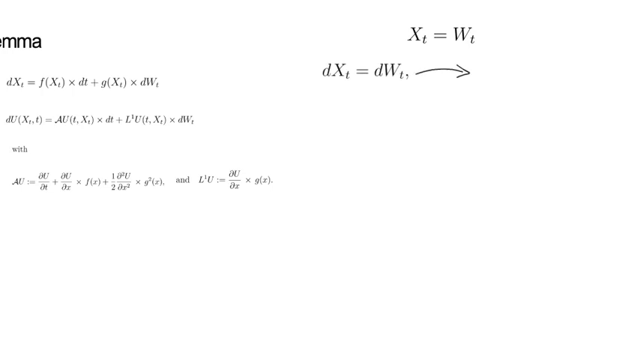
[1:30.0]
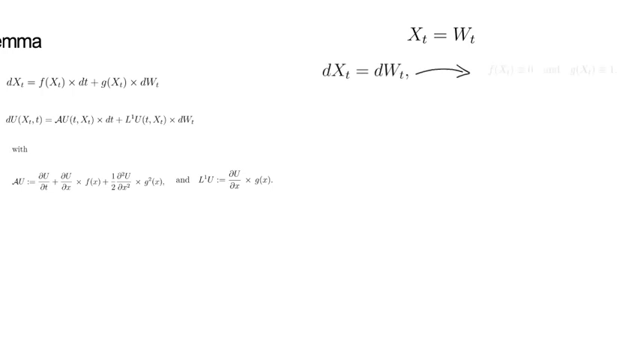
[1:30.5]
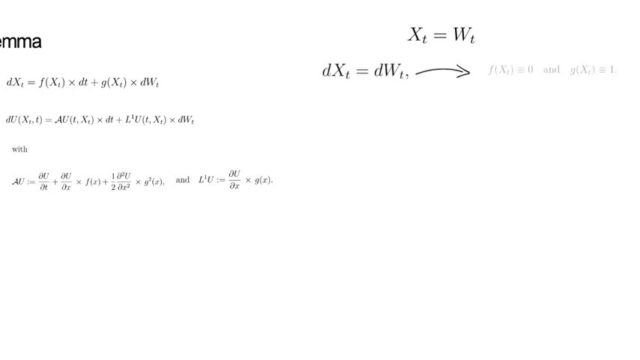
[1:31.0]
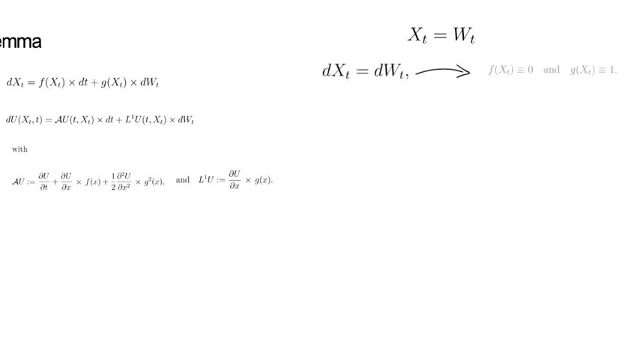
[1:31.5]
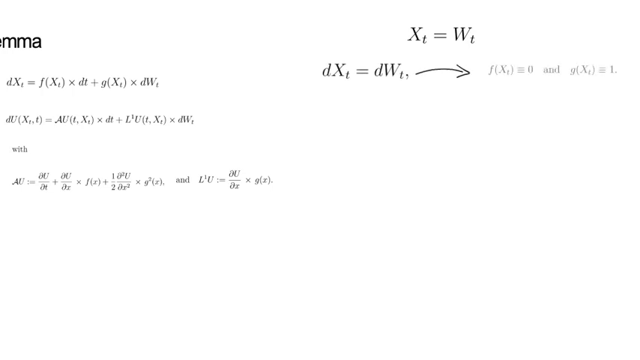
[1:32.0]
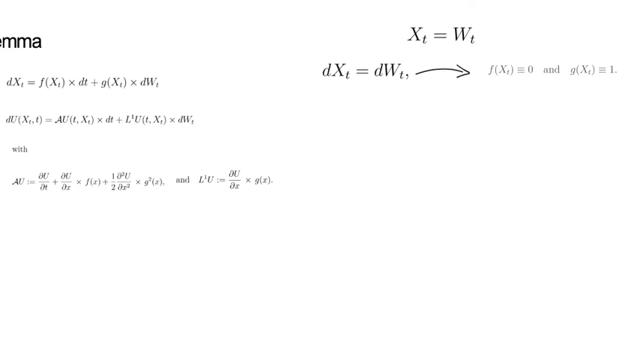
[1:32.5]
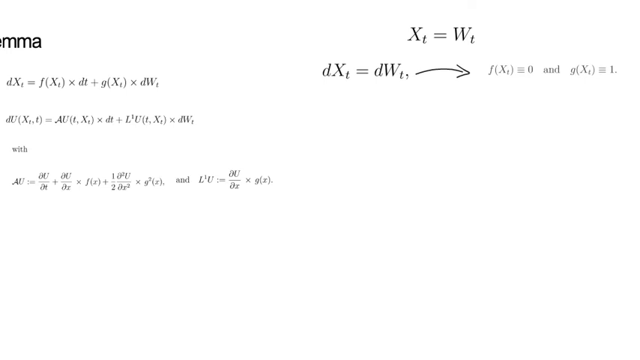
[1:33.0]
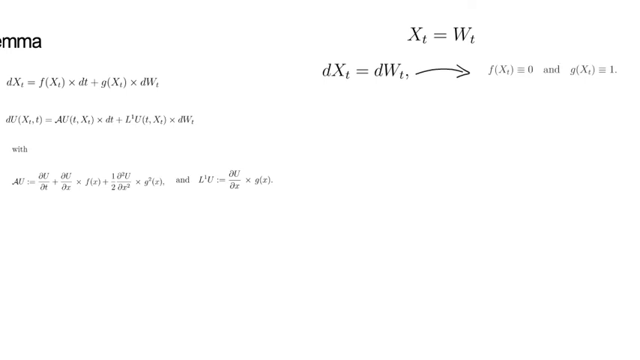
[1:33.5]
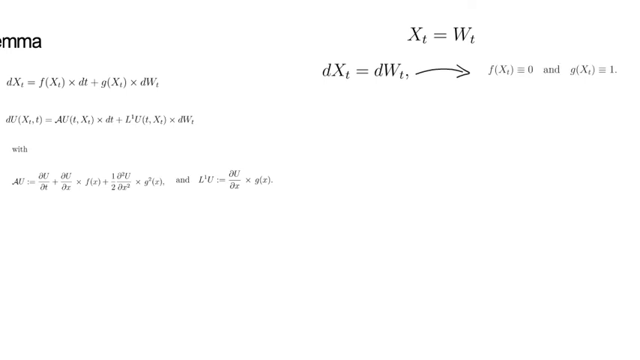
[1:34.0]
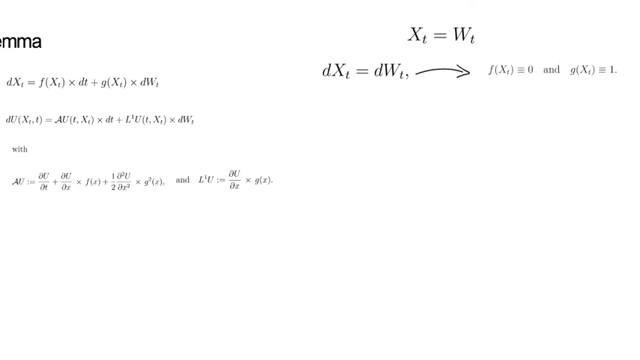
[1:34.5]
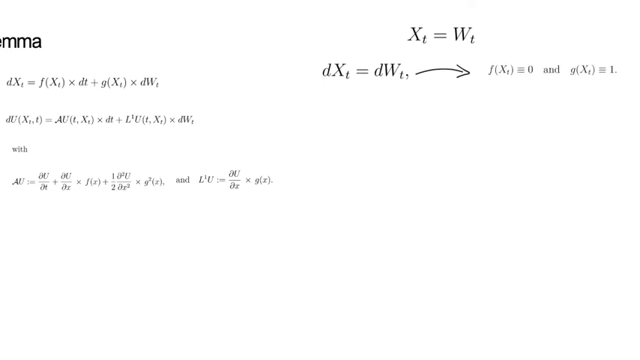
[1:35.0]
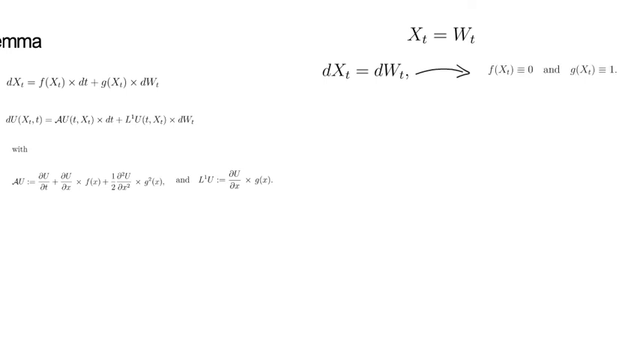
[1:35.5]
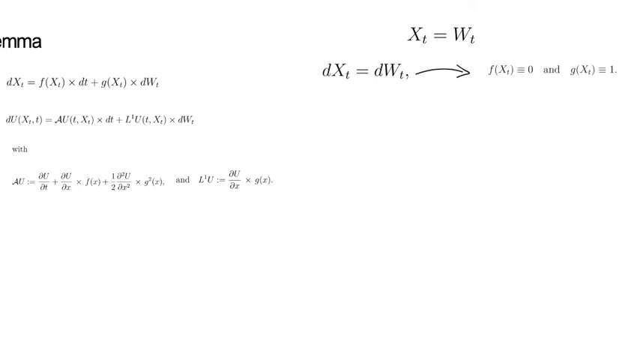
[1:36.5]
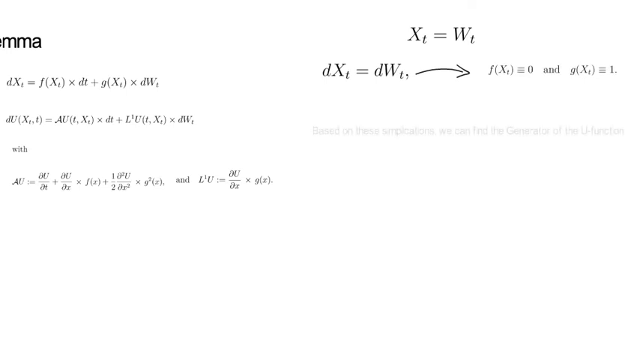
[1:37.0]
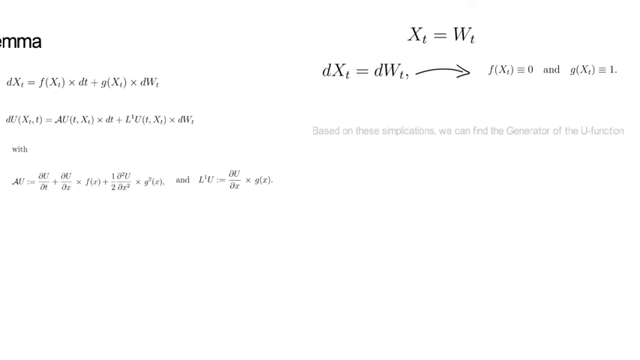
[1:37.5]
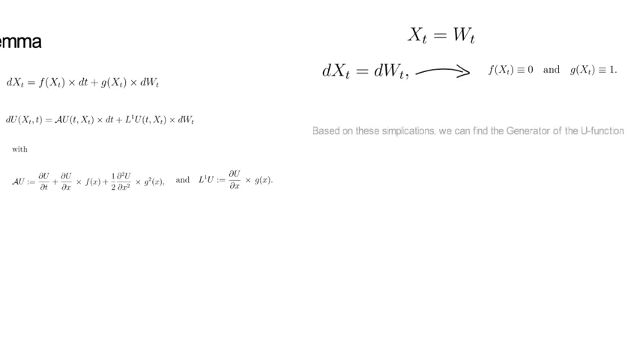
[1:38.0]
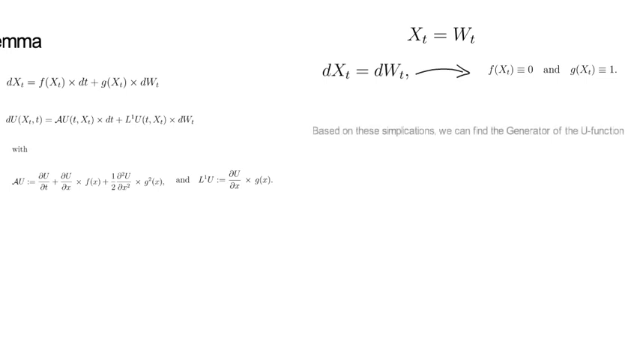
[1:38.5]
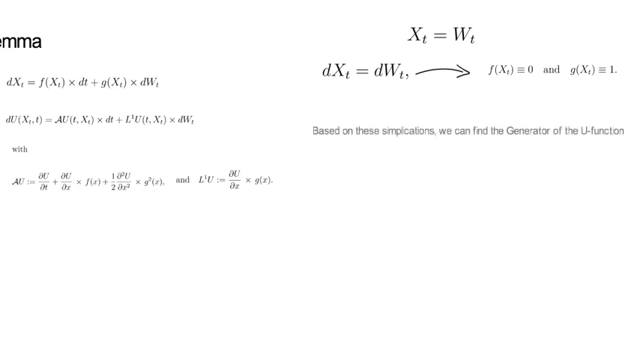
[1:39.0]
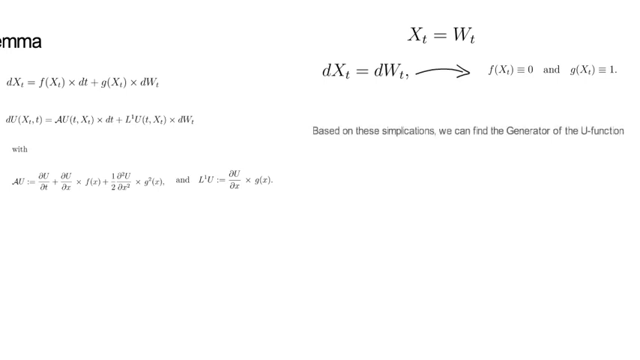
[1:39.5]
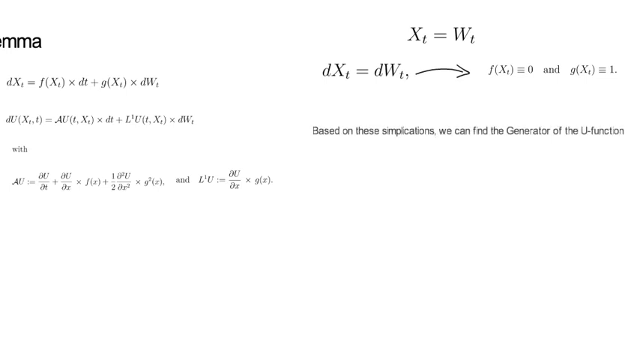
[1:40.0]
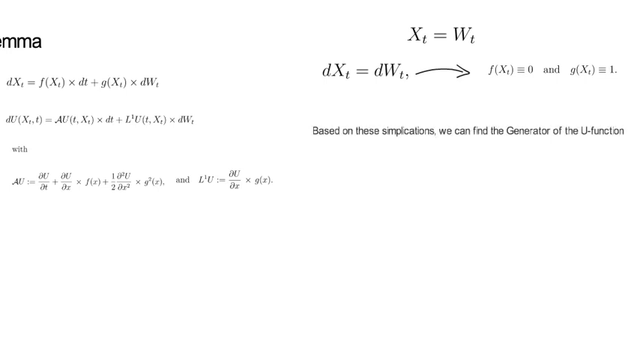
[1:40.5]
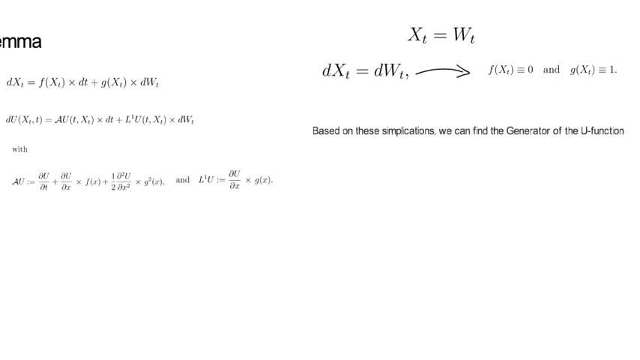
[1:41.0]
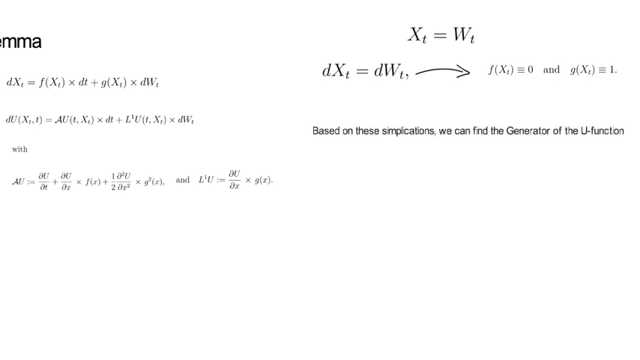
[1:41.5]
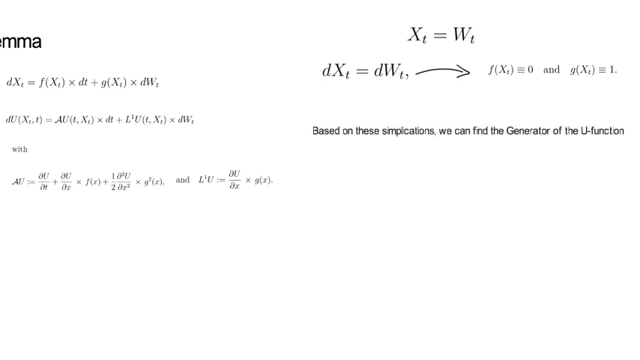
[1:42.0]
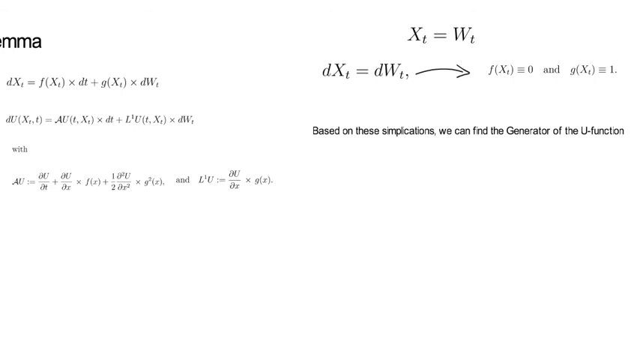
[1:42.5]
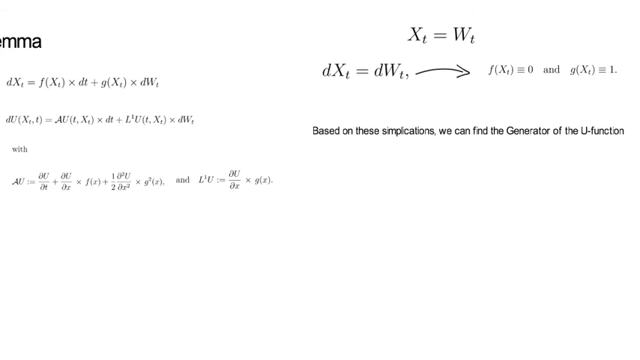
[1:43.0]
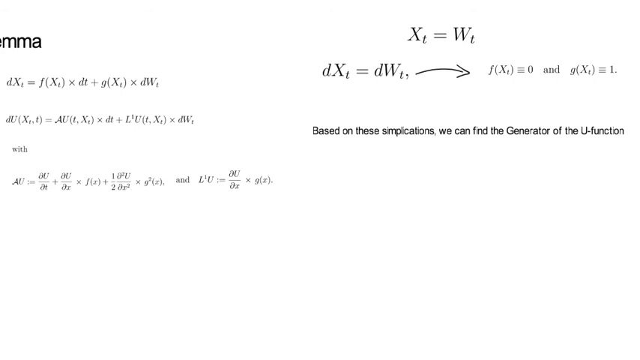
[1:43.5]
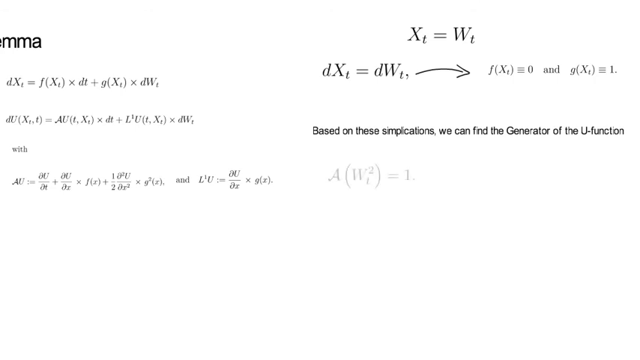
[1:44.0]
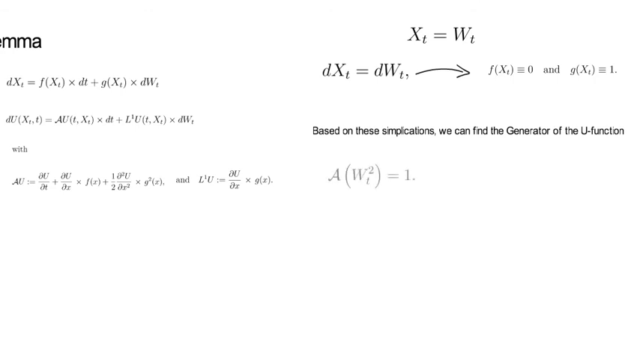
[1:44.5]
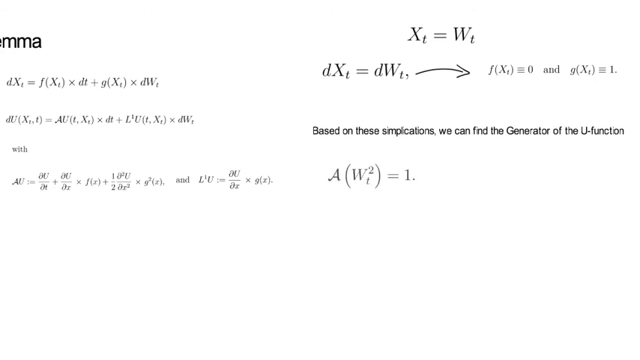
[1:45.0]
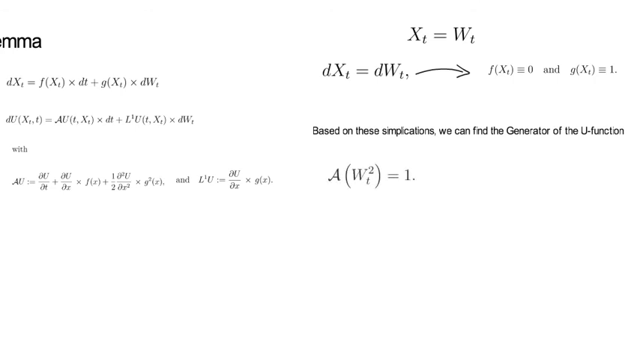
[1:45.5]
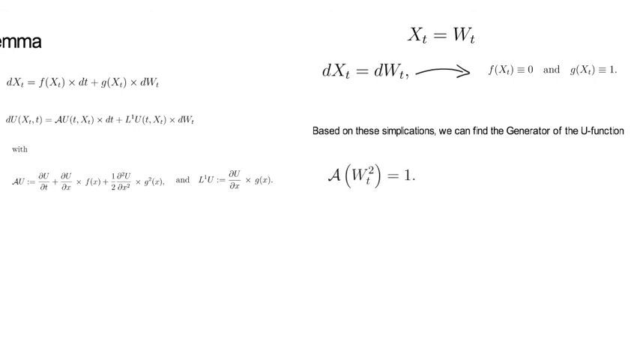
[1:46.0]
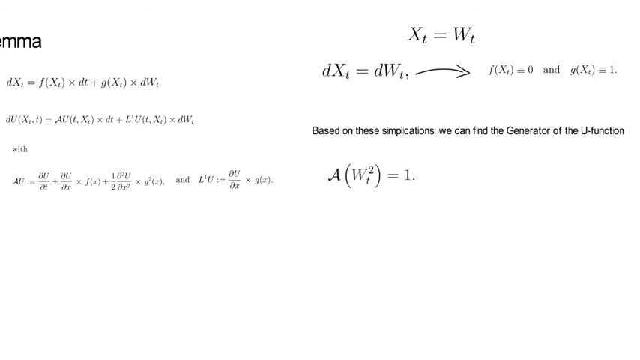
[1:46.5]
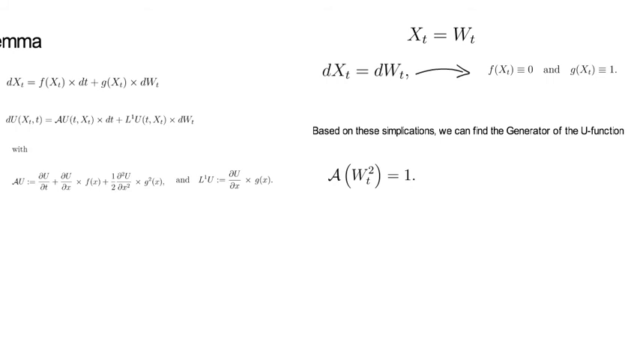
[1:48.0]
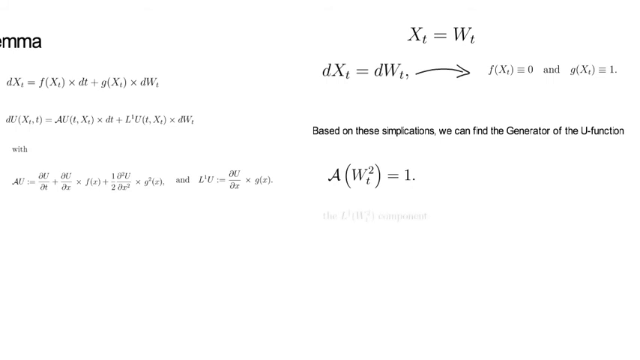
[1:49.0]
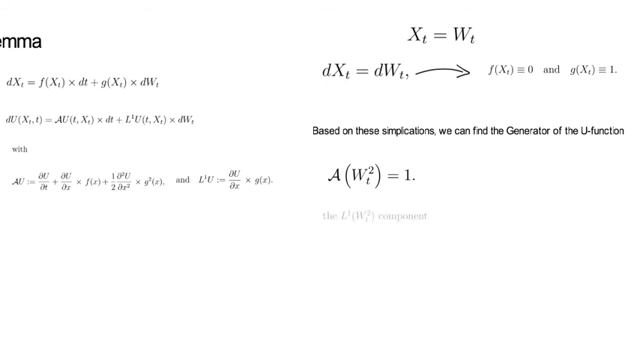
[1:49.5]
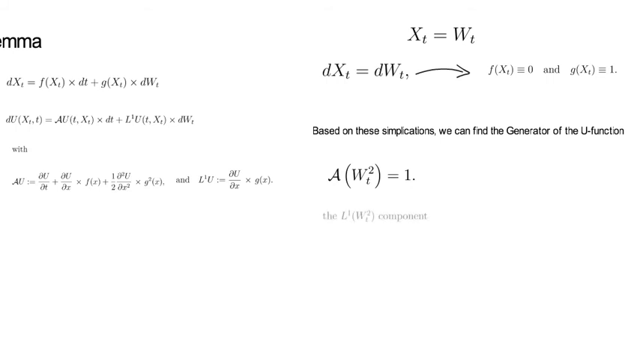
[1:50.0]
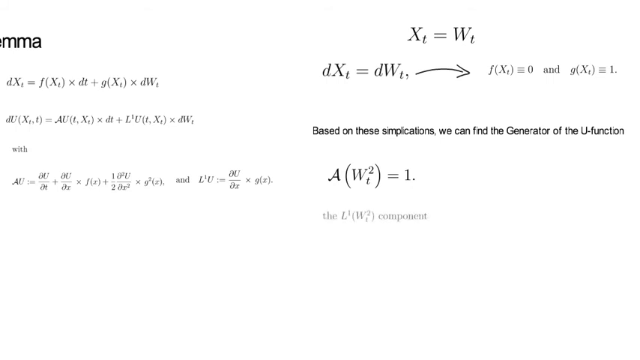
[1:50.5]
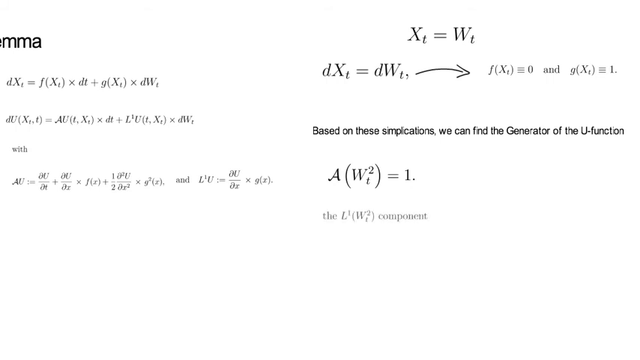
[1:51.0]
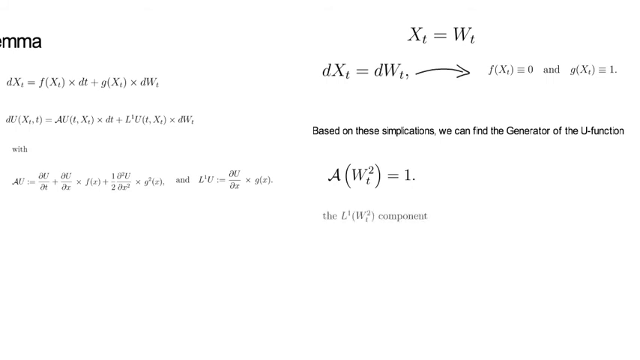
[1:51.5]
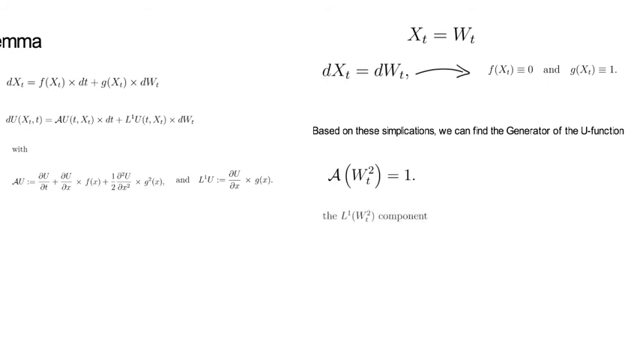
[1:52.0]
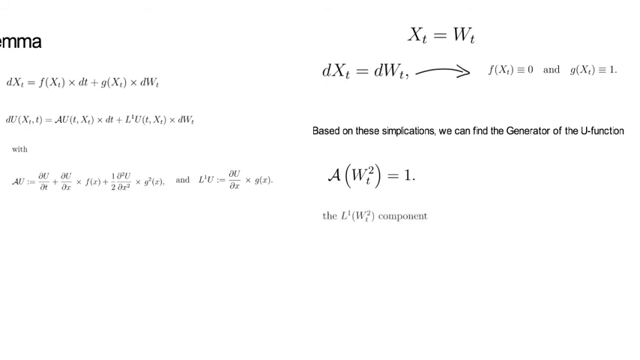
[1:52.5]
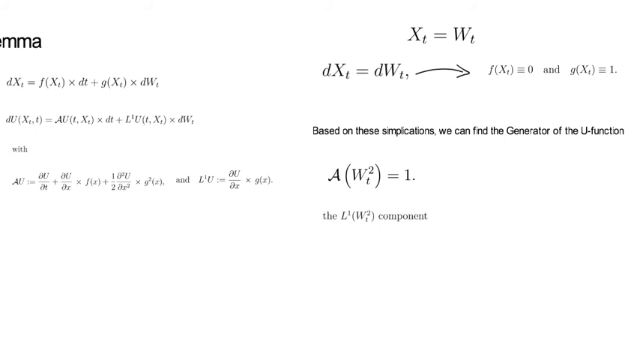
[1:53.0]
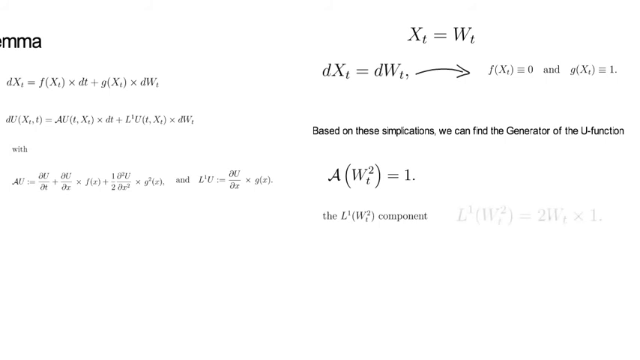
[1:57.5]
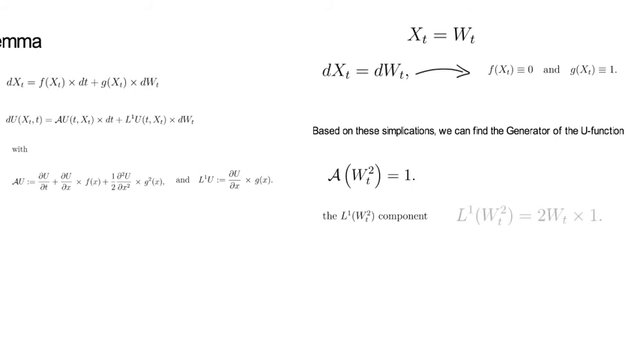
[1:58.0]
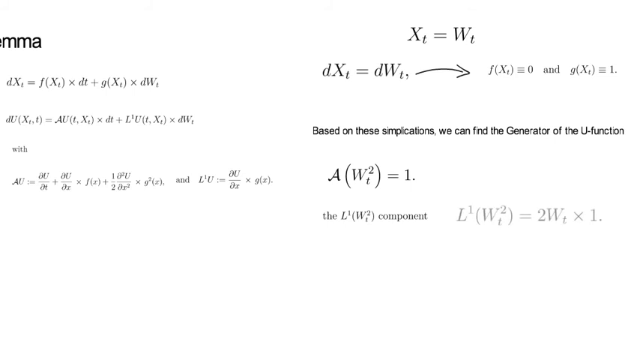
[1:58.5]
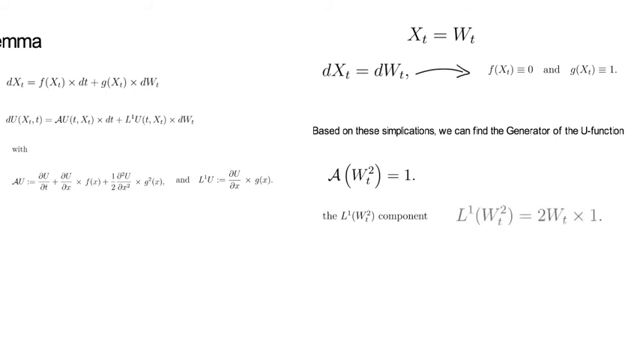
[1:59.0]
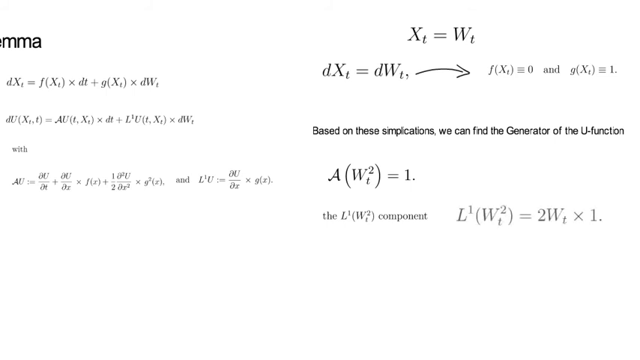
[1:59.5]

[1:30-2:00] The right-side column continues: the arrow leads to f of x t being equivalent to 0 and g of x t being equivalent to one. Text then fades in below this column: "based on these simplifications, we can find the generator of the u function," presented below as A of W squared t equals one, and next to this line L to the one of W squared t equals two W t times one. The left side of the slide still shows the earlier text, with the lemma a bit out of frame and its description, d of x t equals f of x t times d t plus g of x t times d W, with three more lines of text below it. The background is still plain white, with the mathematical calculations in black in a classic text font.